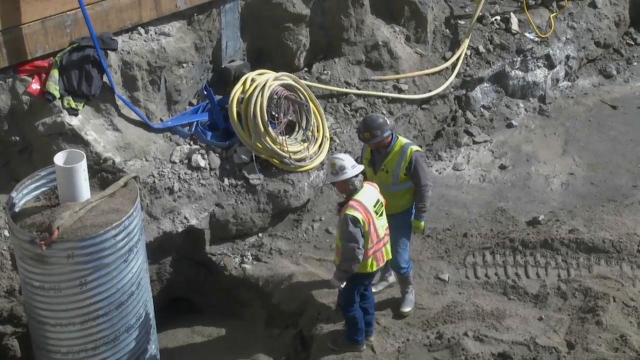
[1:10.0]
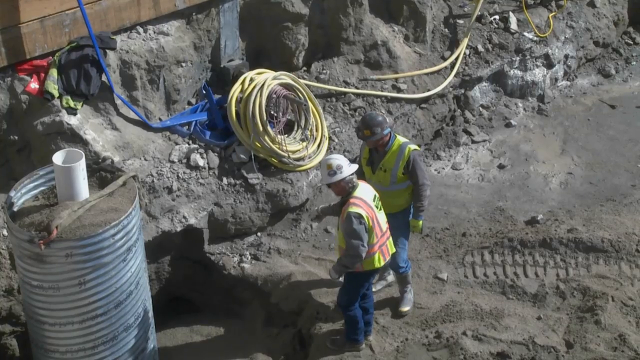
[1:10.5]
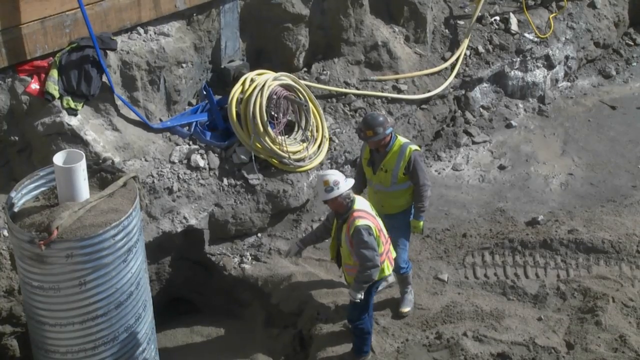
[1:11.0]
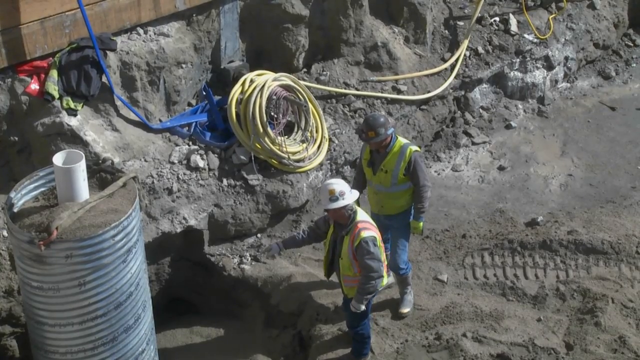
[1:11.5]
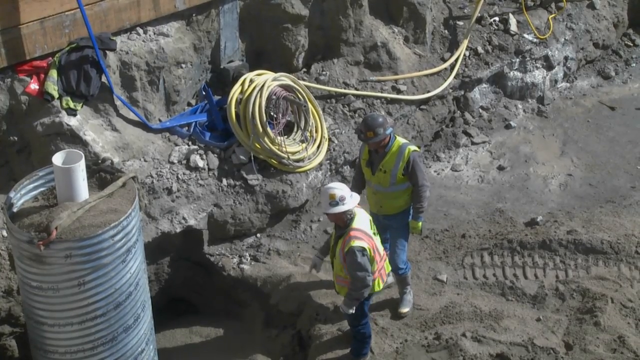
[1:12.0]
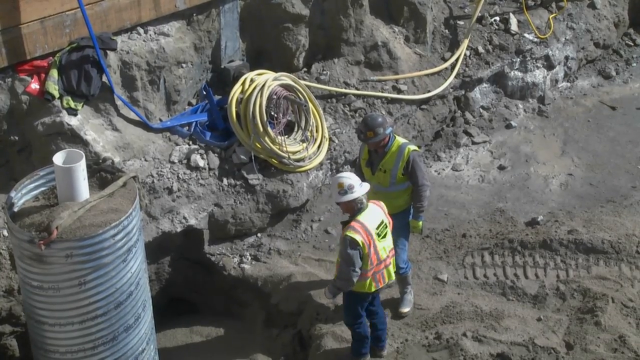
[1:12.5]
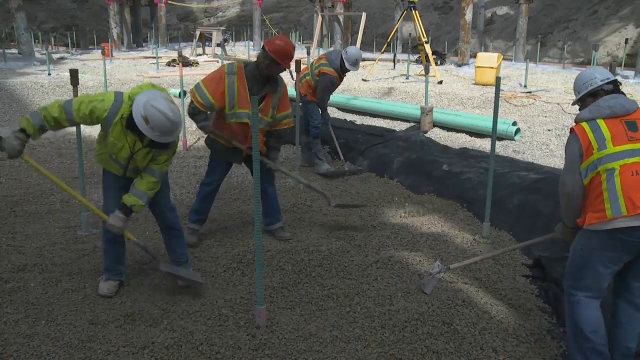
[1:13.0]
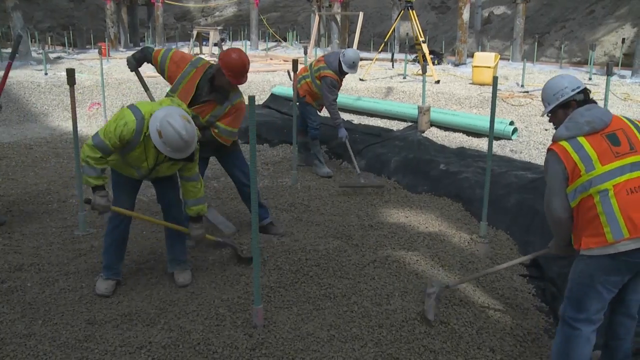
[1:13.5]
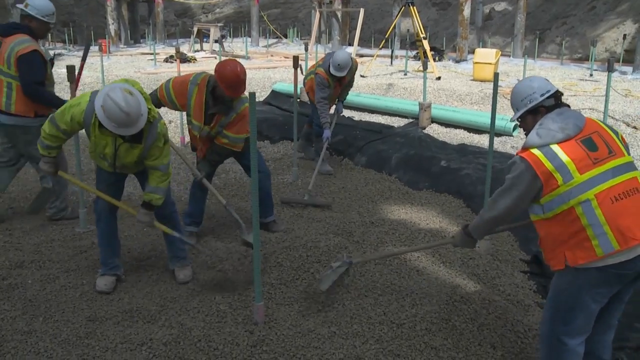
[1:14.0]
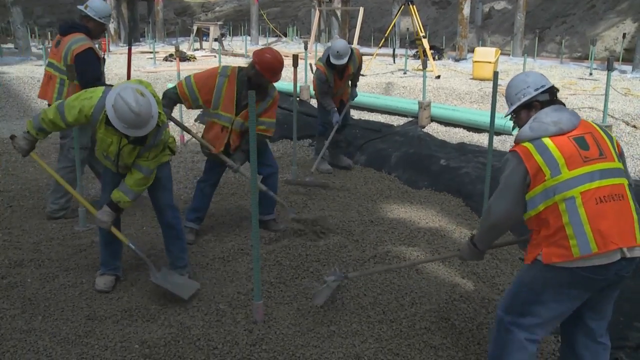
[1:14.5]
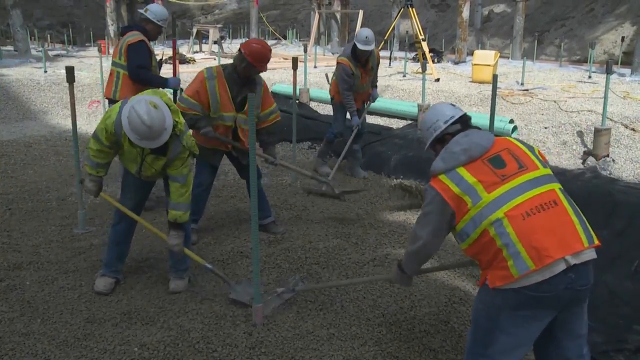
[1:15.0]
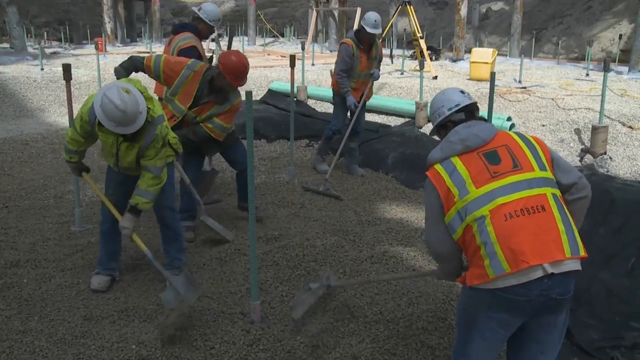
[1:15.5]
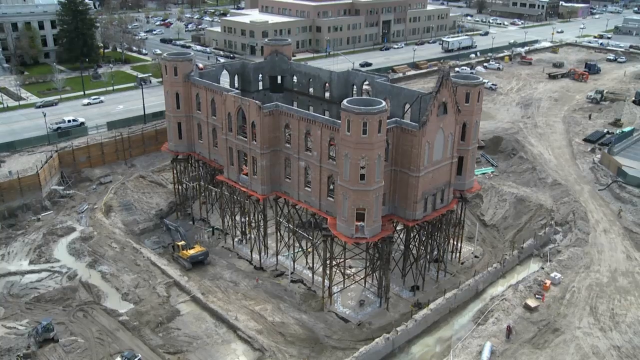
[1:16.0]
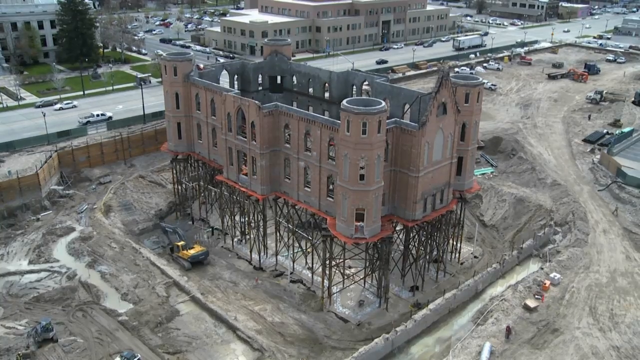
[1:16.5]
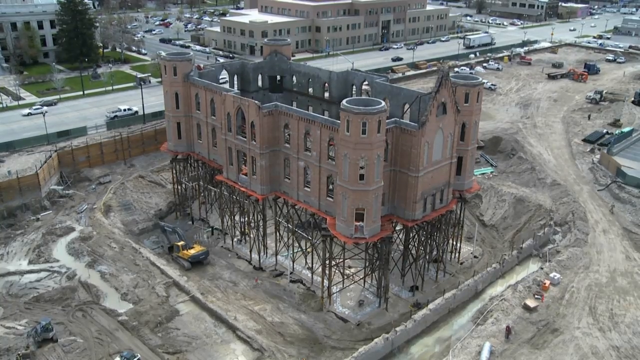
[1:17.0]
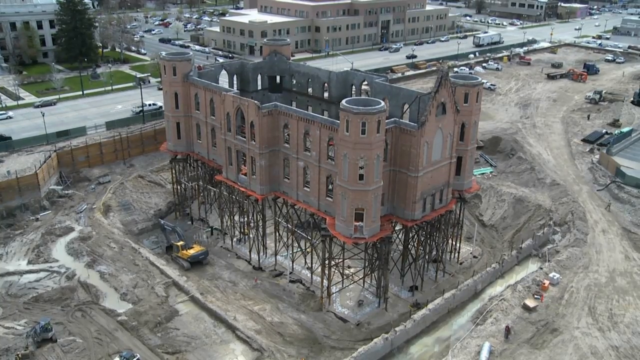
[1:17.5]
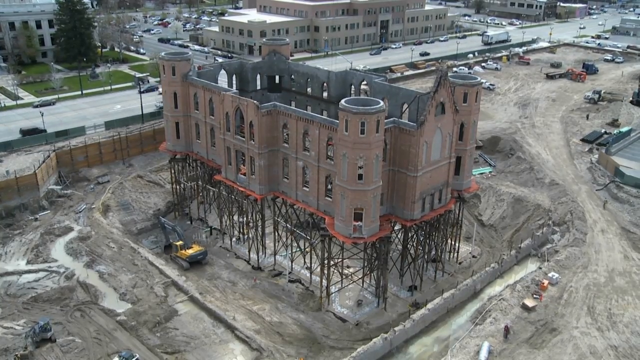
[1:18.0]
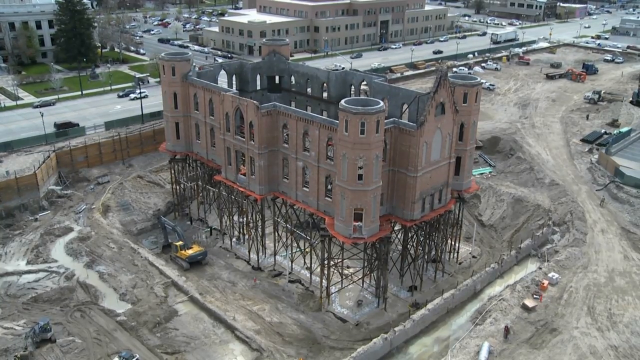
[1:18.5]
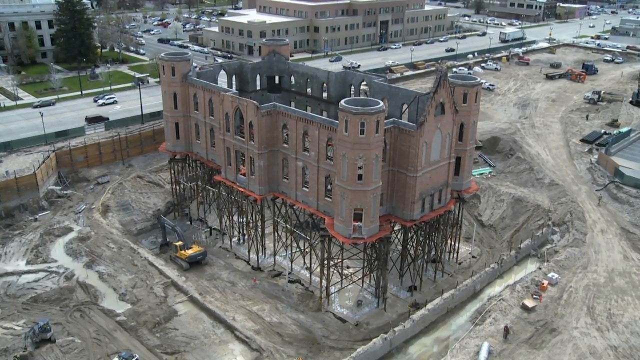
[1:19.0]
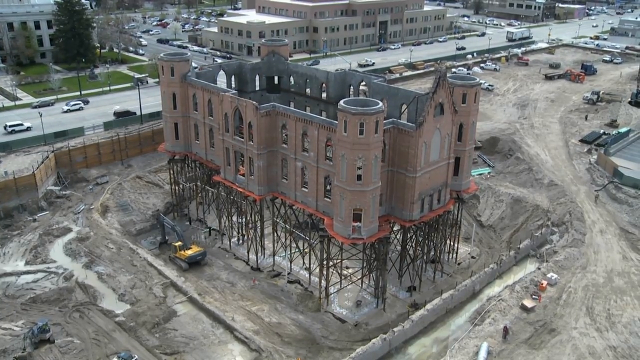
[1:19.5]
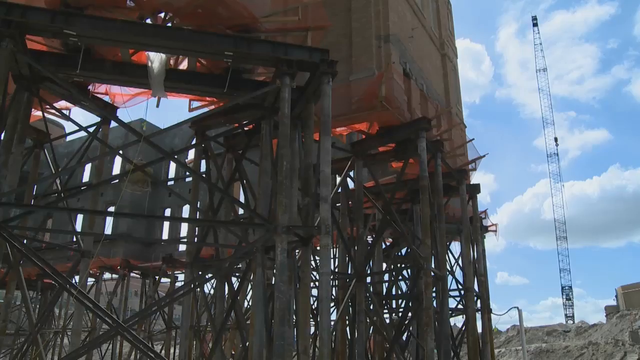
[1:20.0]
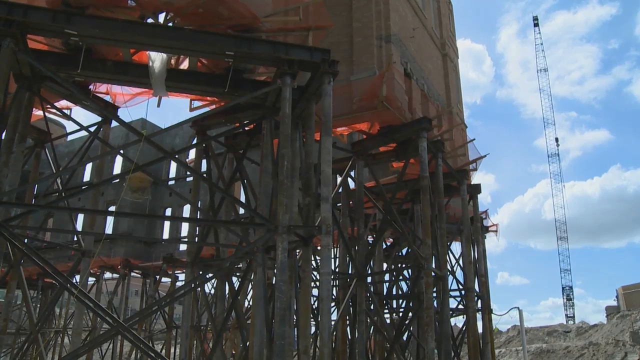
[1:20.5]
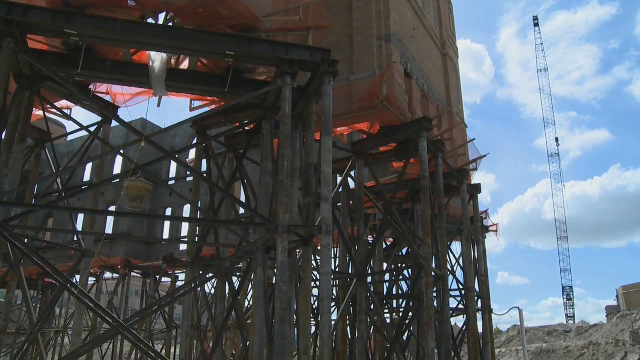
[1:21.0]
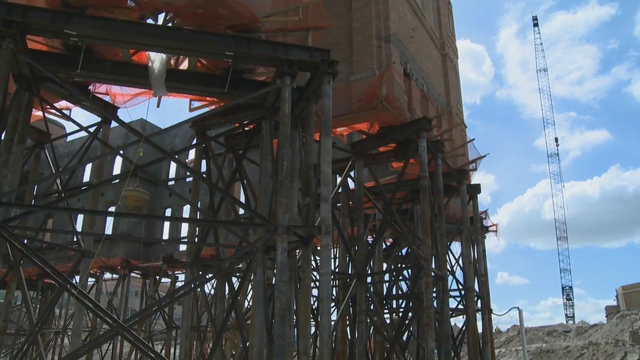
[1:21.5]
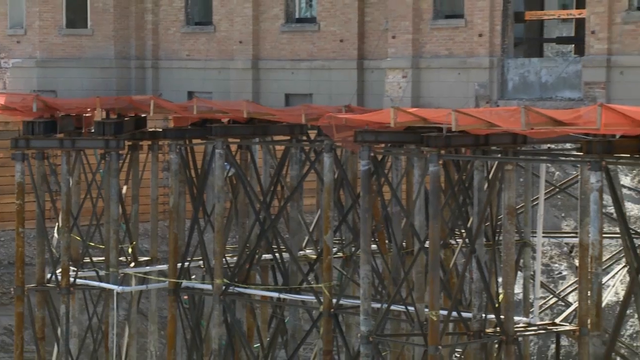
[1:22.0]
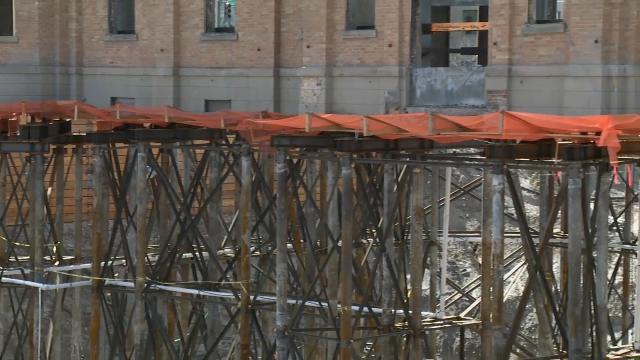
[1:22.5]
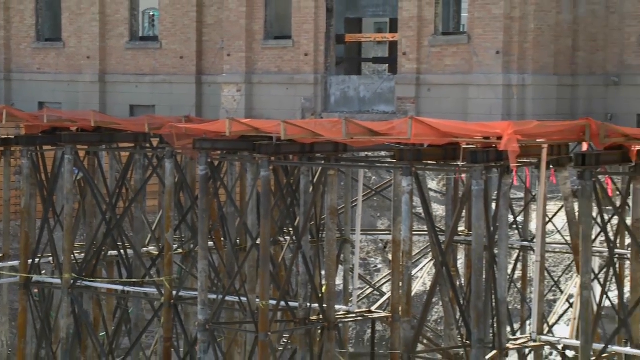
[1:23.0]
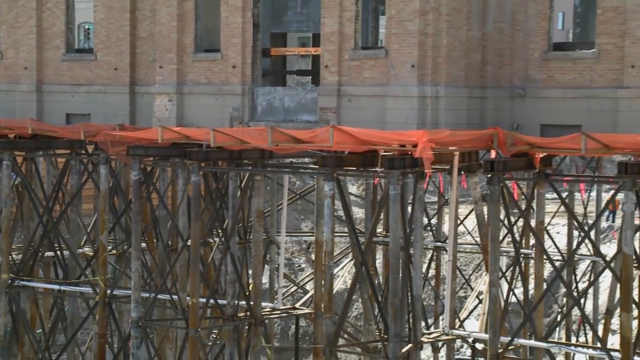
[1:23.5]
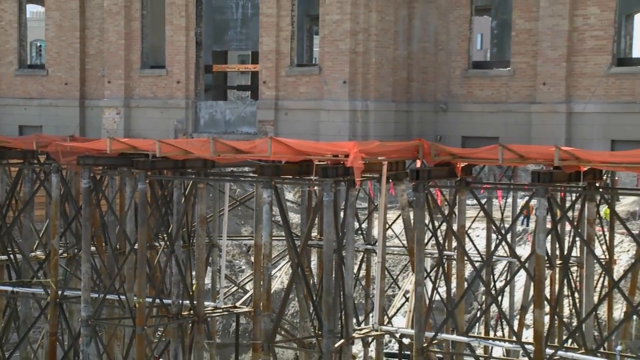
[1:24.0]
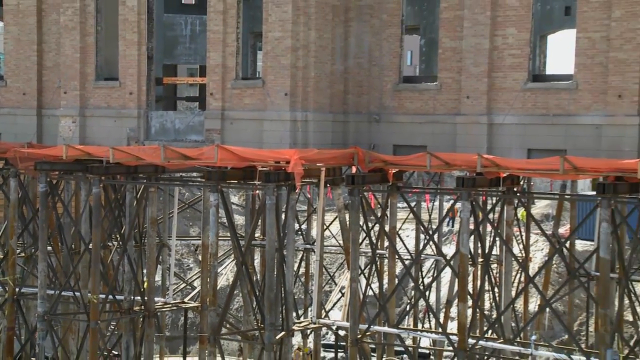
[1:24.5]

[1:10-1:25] Five construction workers appear to be shoveling or leveling gravel, while other workers rake the gravel back and forth. Shots of the building come from different viewpoints, some zoomed in close and some panned far out. Two construction workers point something out, and two men are maybe discussing laying some pipe or plumbing. The shots are more close-ups of workers doing various jobs. The setting is still outside, with fewer construction workers than before.